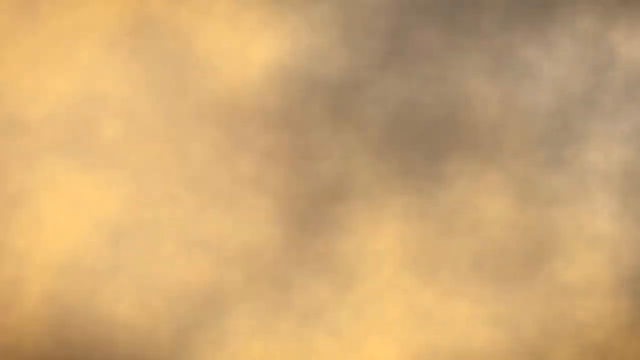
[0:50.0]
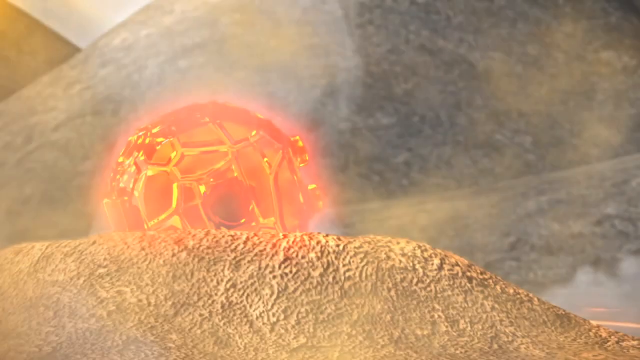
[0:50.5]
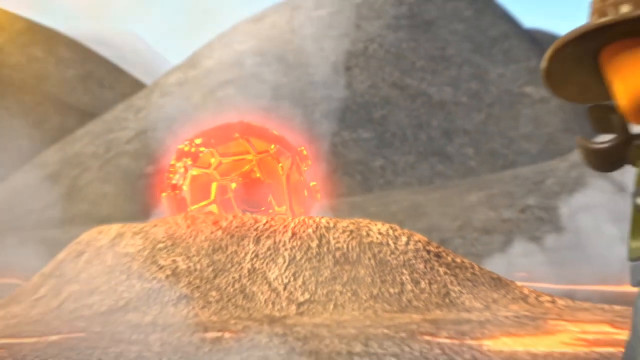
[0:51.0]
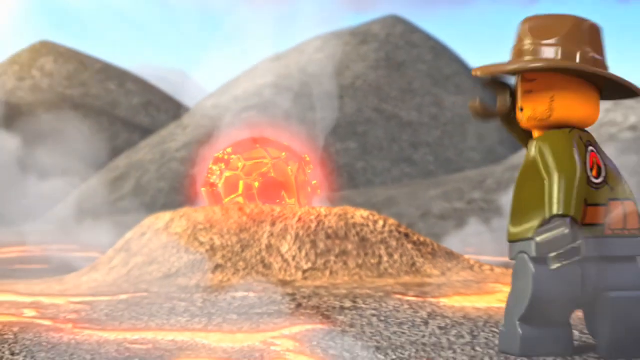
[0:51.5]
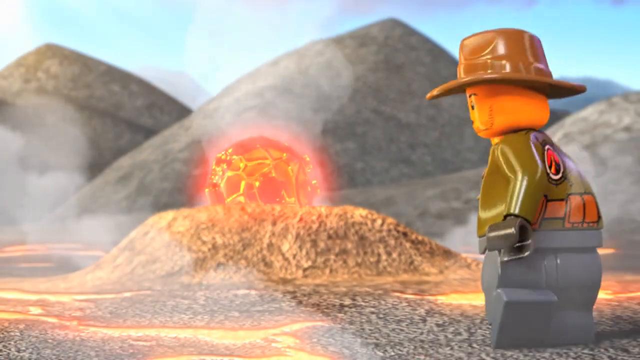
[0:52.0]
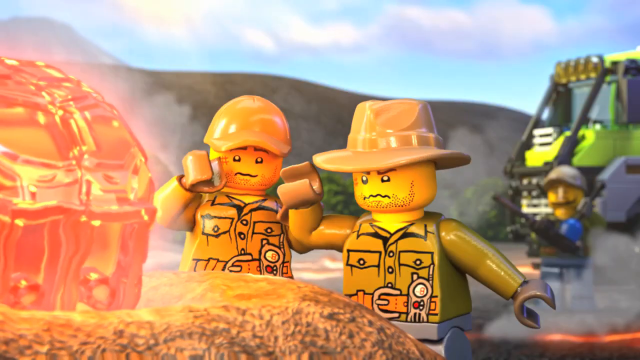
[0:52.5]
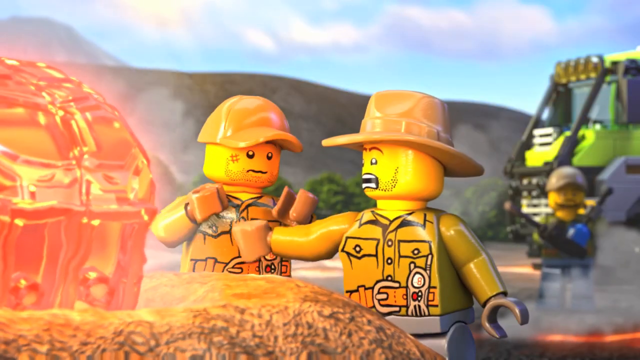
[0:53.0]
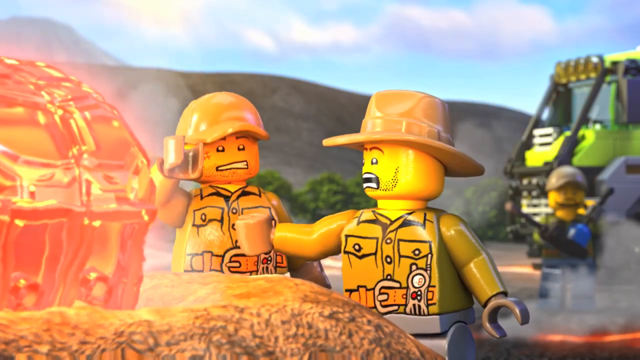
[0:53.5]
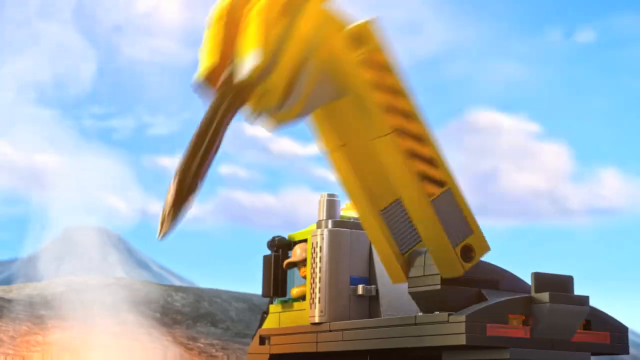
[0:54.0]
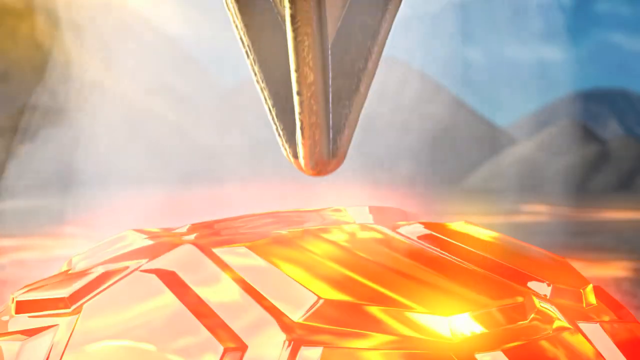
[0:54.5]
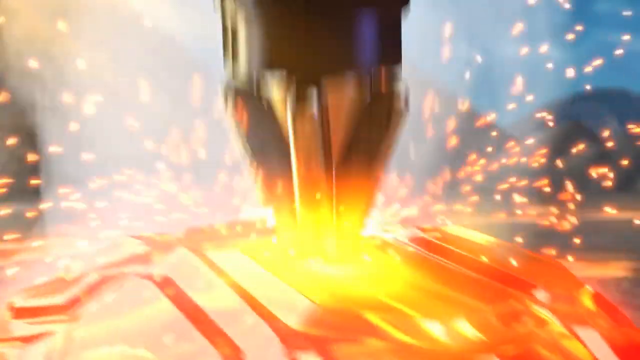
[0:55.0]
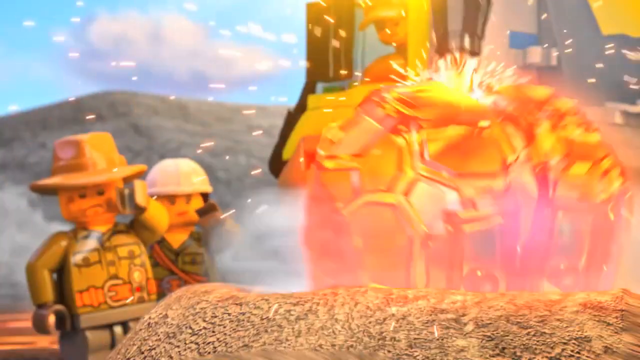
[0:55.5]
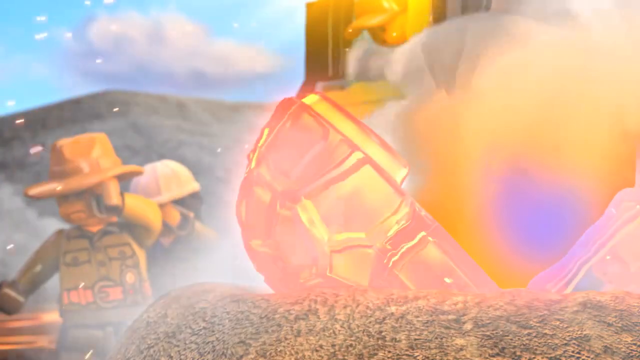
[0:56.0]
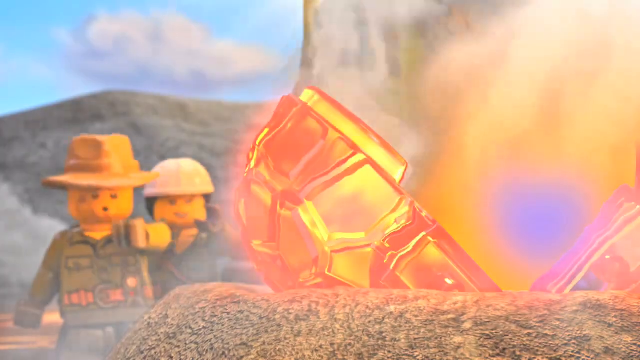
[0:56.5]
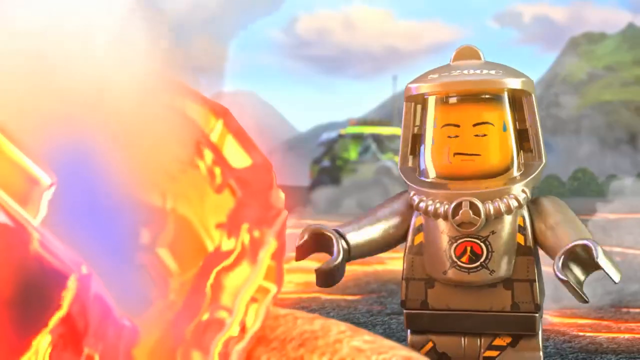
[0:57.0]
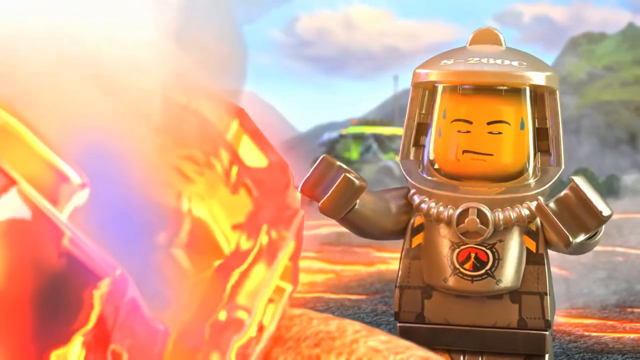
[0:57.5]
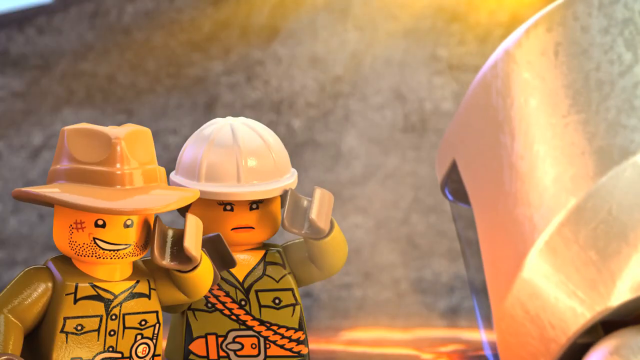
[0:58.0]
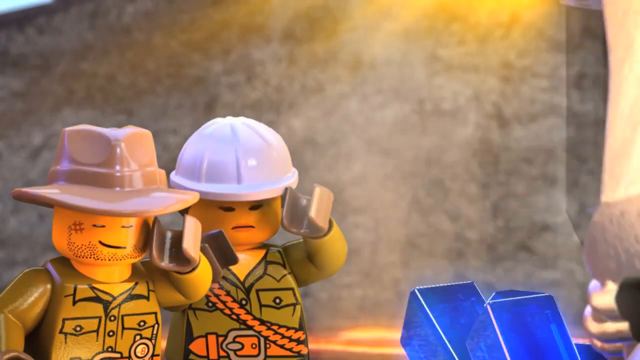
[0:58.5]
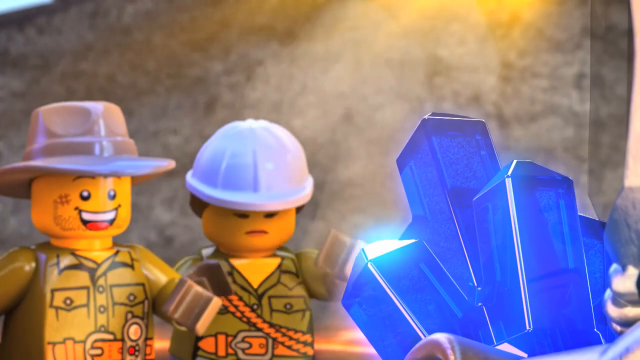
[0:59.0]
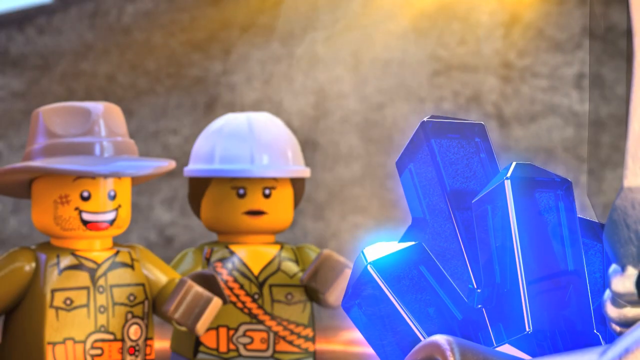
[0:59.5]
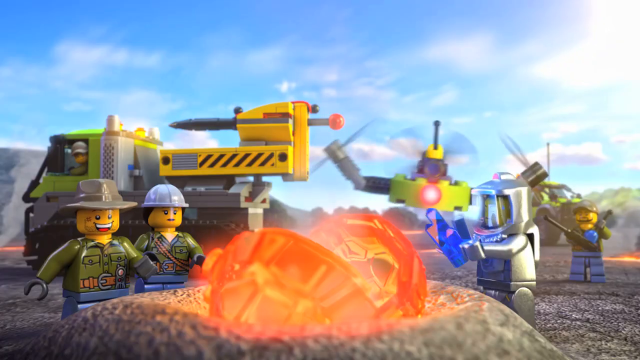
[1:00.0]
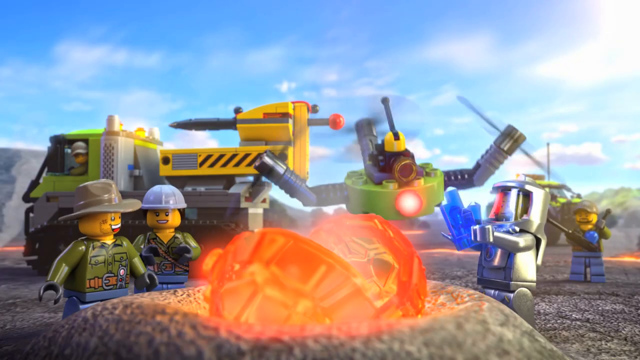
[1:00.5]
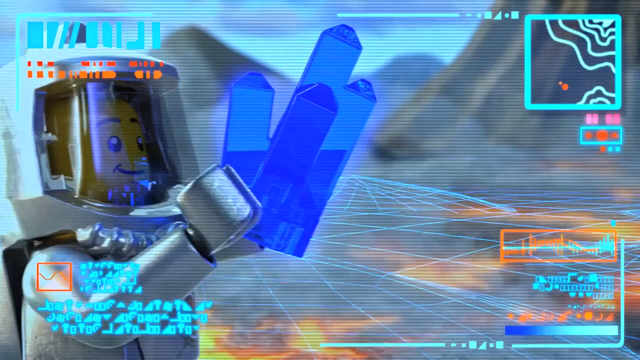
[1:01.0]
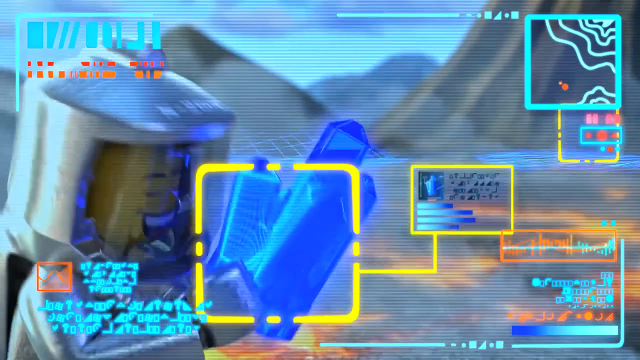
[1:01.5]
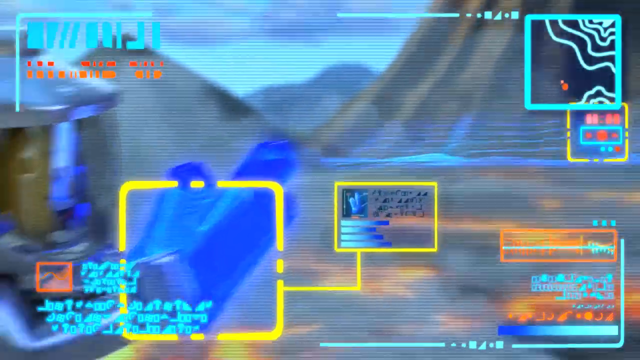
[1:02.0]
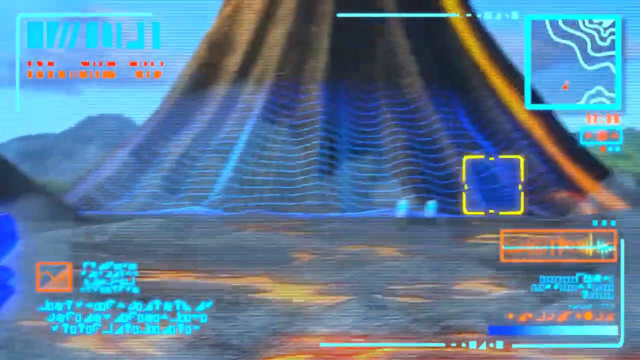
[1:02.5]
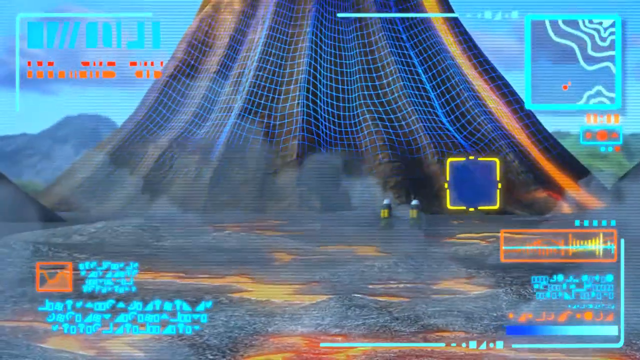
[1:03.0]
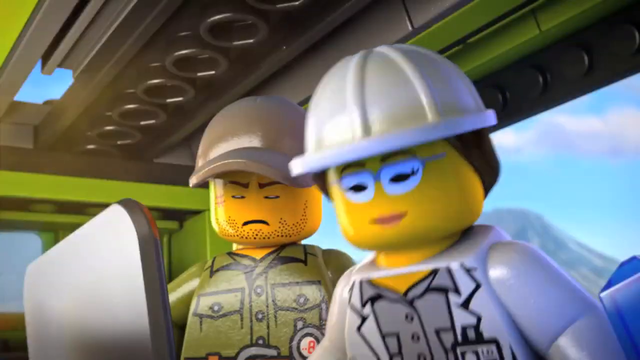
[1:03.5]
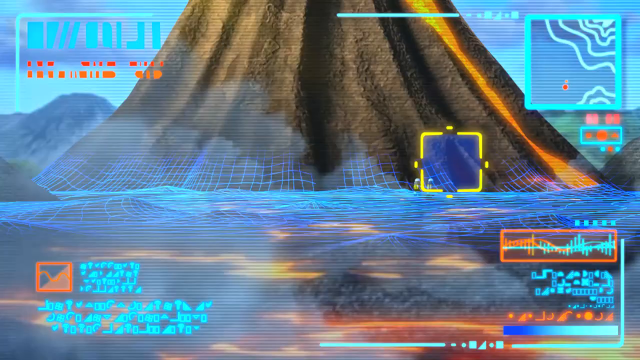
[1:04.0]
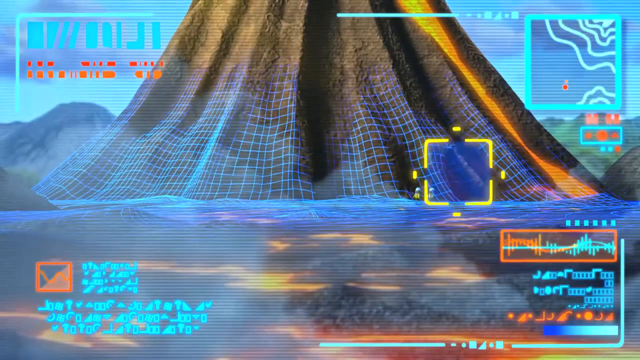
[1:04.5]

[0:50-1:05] What appears to be perhaps a geologist comes upon some sort of large stone, possibly a diamond, out in the middle of the field; it looks like it perhaps came out of the volcano. A jackhammer device on top of a piece of large heavy equipment jackhammers down into the center of the rock. Once the rock cracks open, it reveals what appears to be a large set of maybe three to four crystals, almost in a sort of geode. Everybody is very excited to see this. Finally, a drone flies in from one side and scans the area.